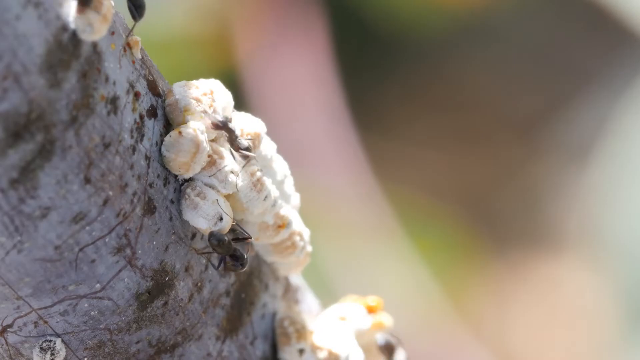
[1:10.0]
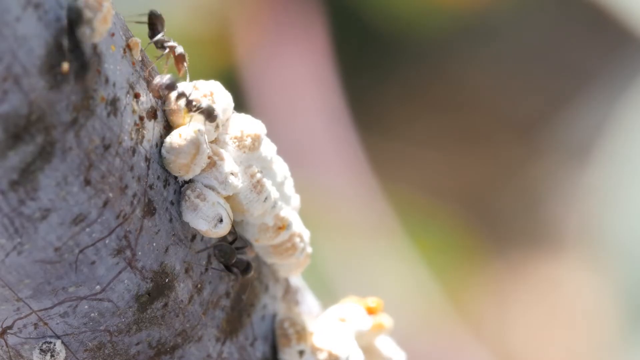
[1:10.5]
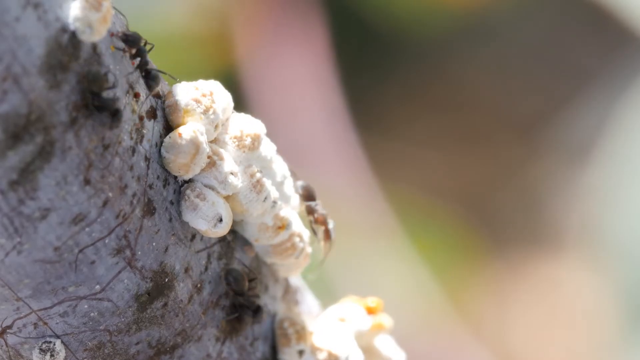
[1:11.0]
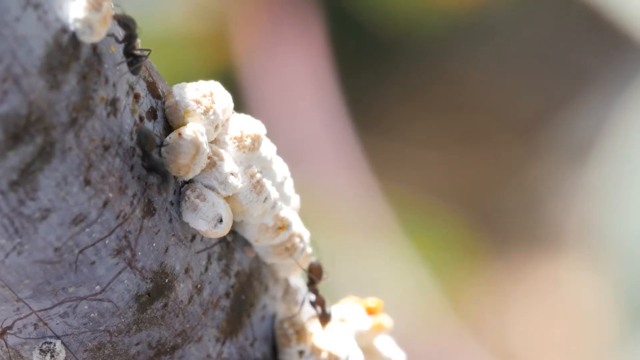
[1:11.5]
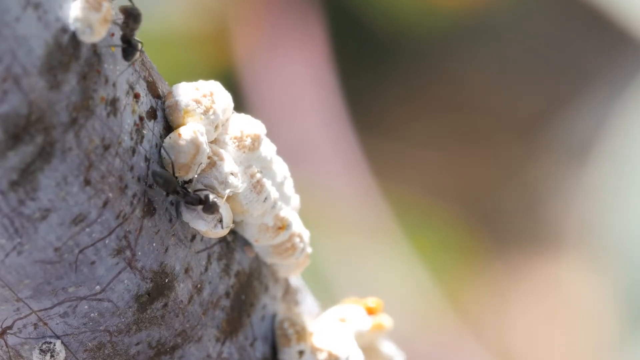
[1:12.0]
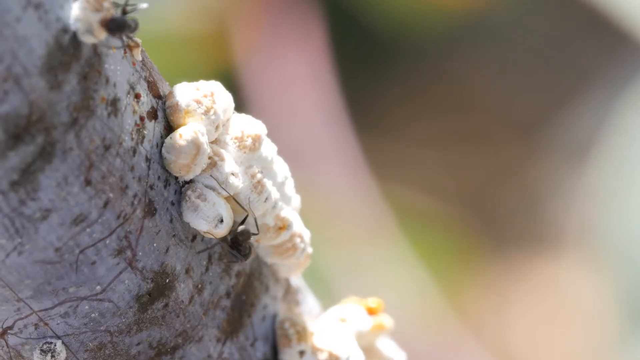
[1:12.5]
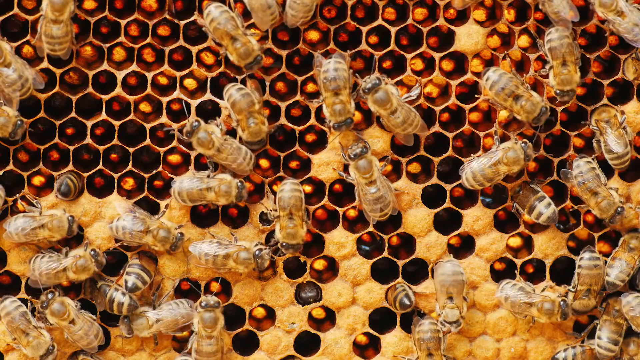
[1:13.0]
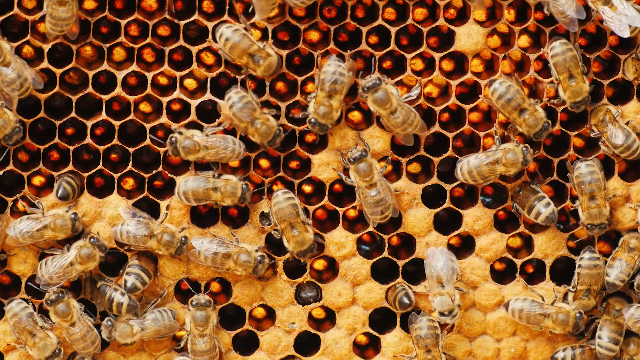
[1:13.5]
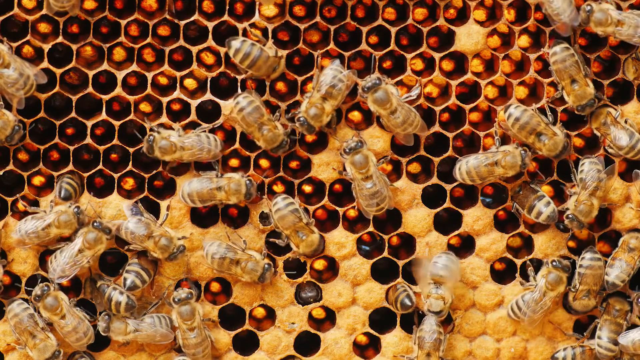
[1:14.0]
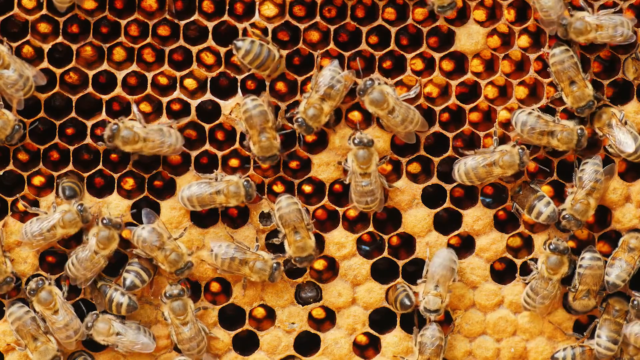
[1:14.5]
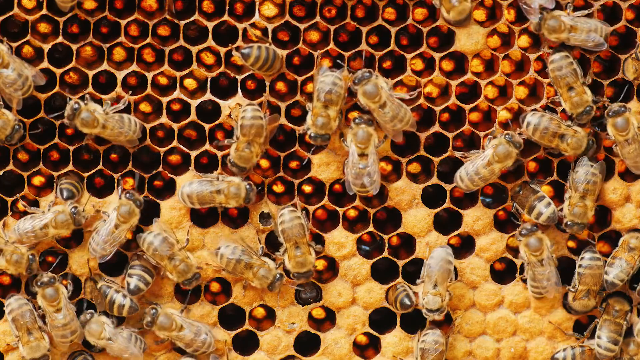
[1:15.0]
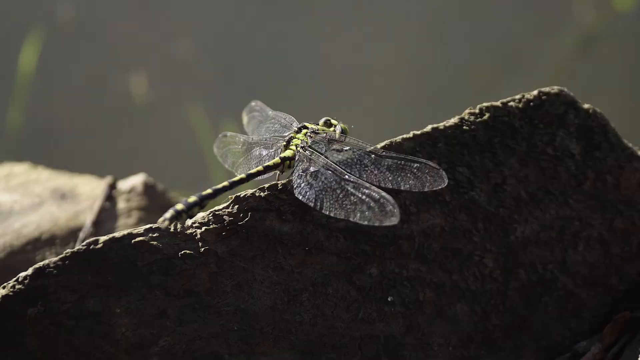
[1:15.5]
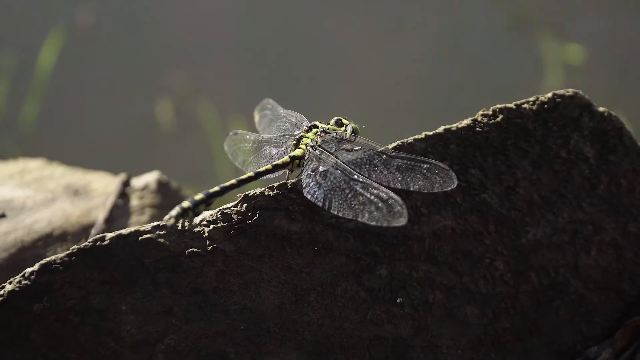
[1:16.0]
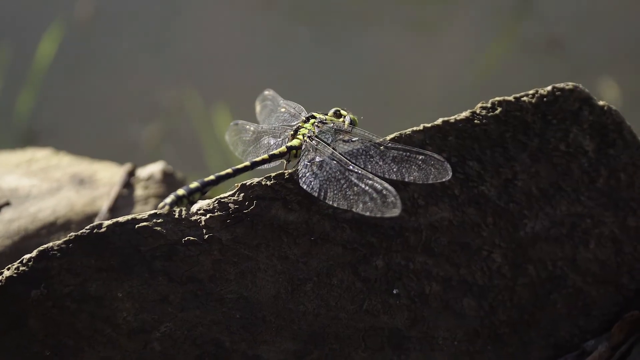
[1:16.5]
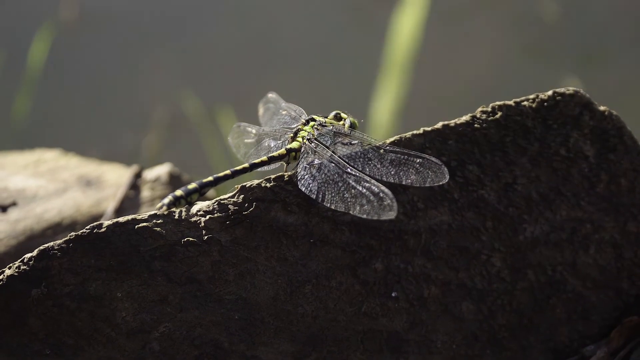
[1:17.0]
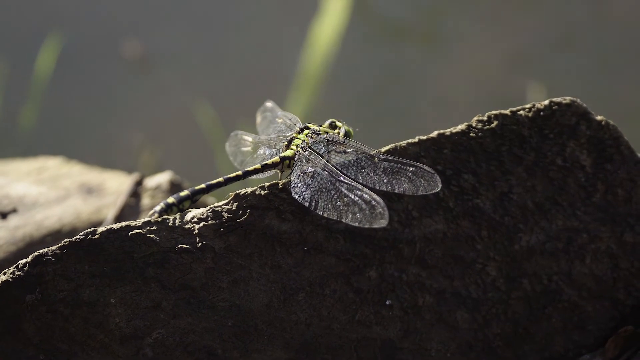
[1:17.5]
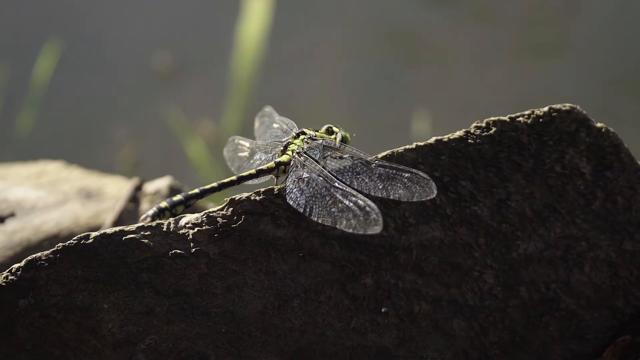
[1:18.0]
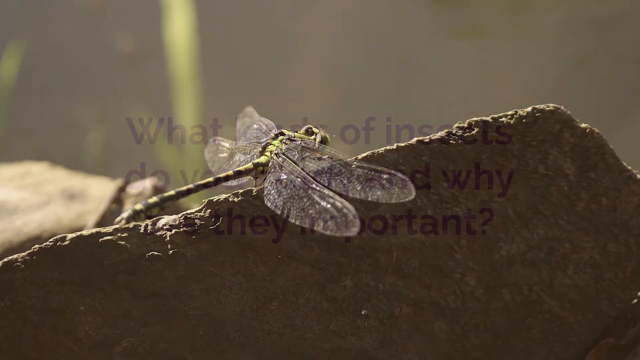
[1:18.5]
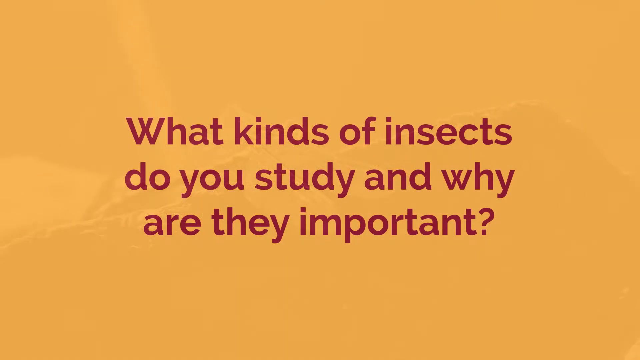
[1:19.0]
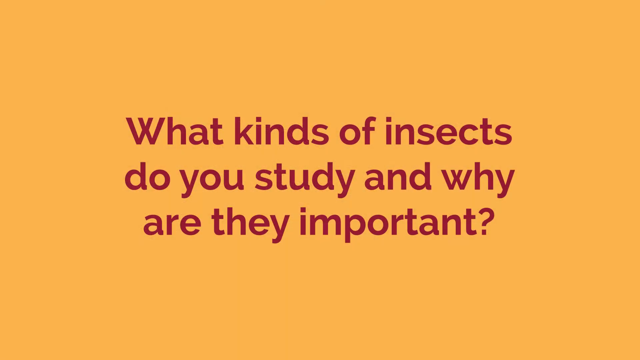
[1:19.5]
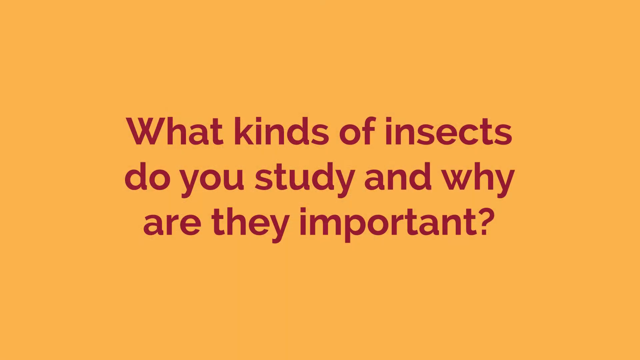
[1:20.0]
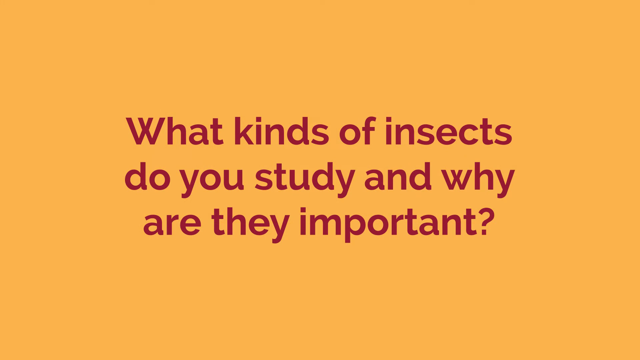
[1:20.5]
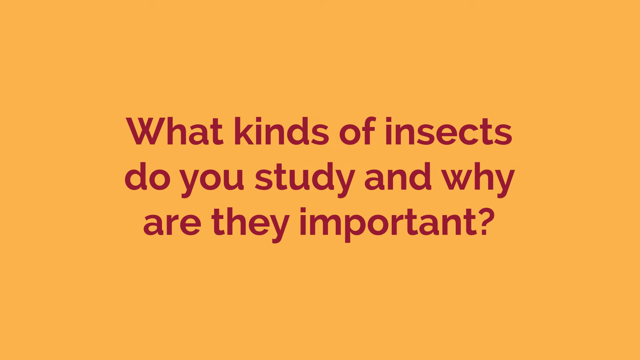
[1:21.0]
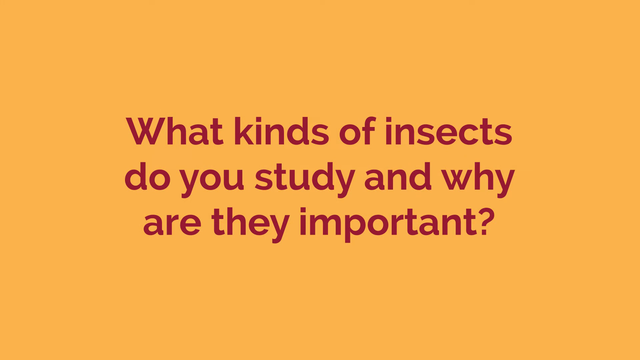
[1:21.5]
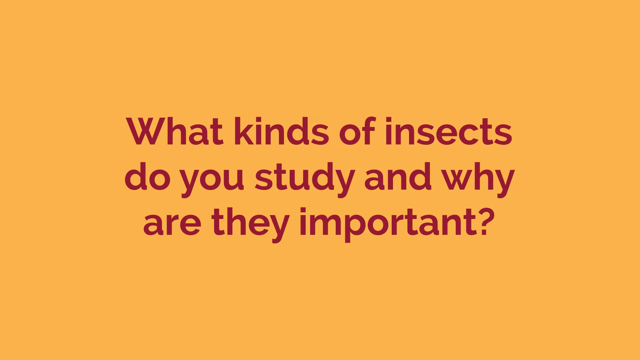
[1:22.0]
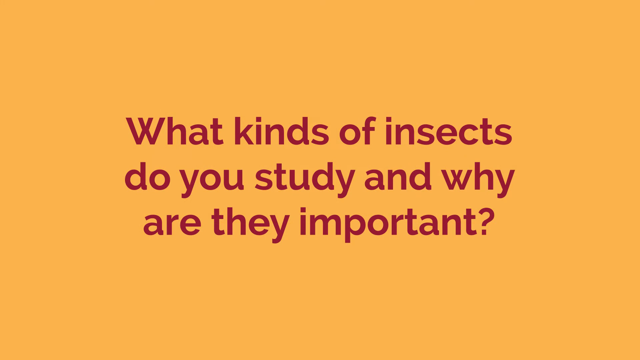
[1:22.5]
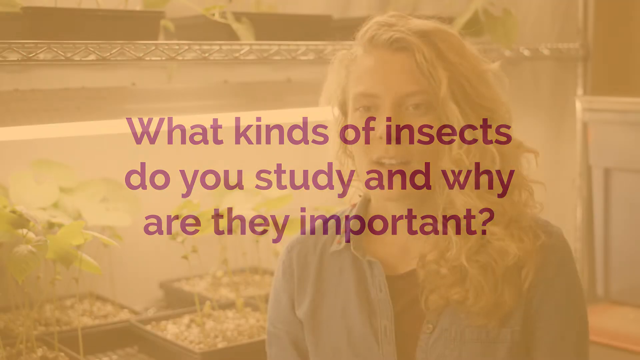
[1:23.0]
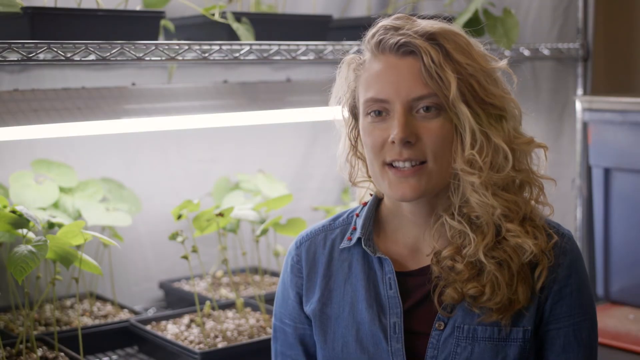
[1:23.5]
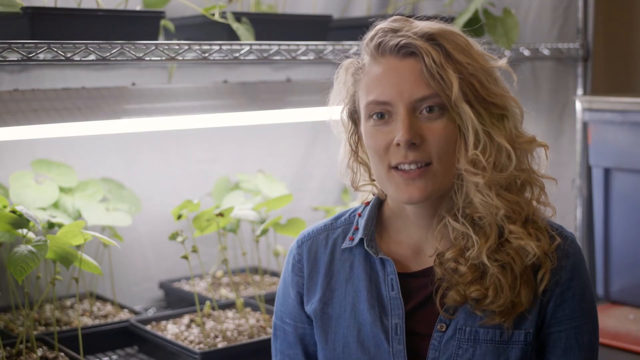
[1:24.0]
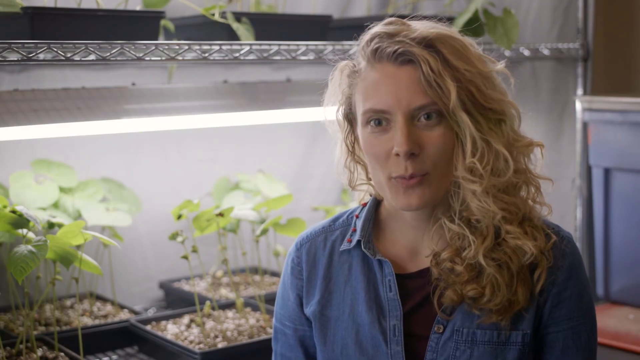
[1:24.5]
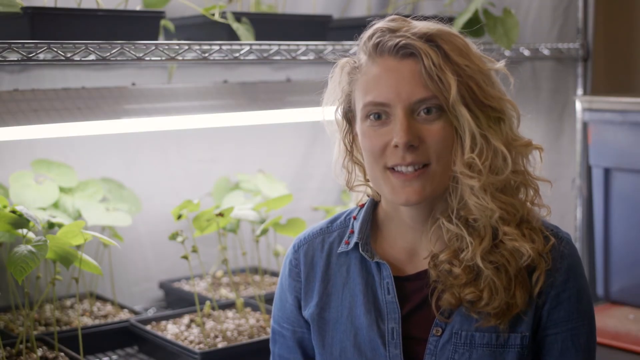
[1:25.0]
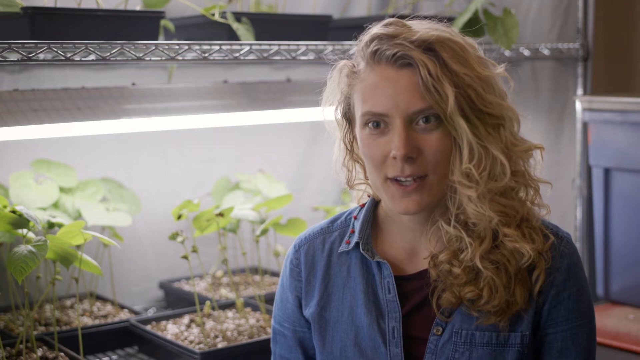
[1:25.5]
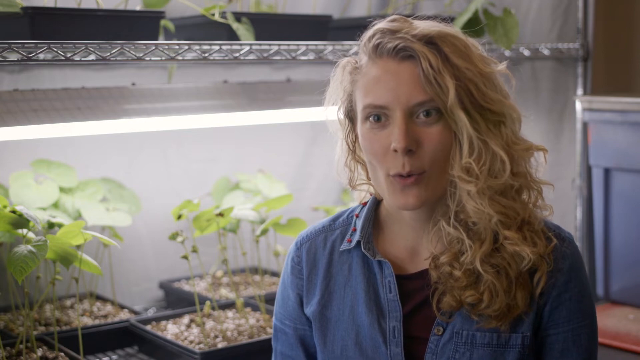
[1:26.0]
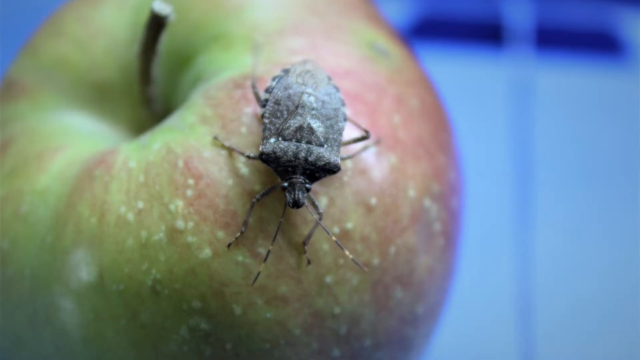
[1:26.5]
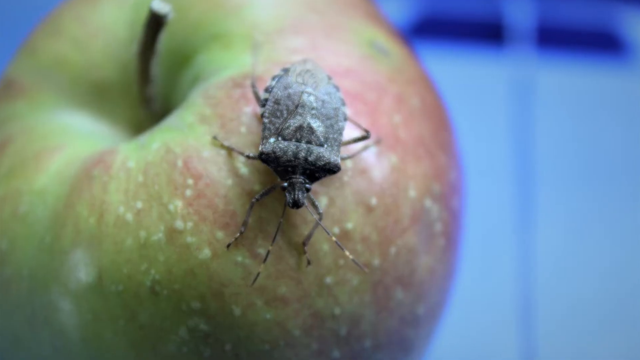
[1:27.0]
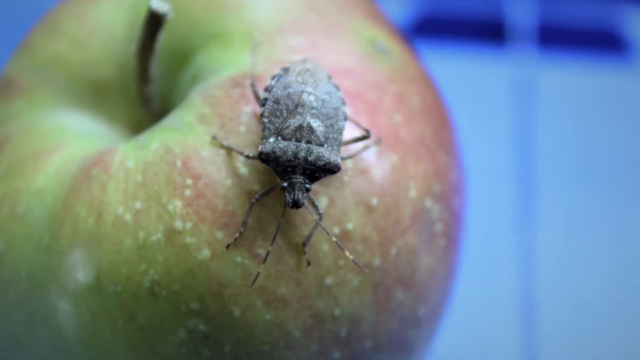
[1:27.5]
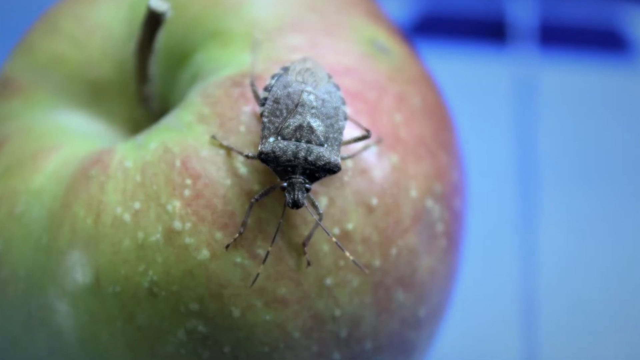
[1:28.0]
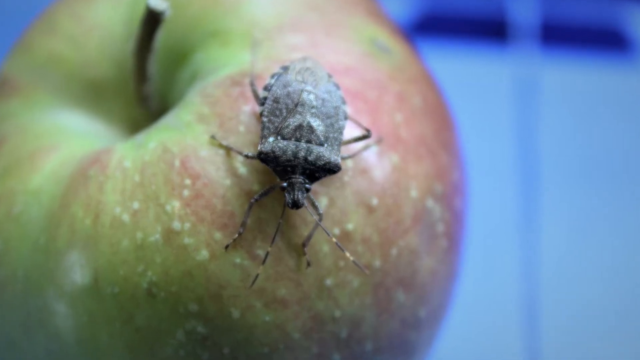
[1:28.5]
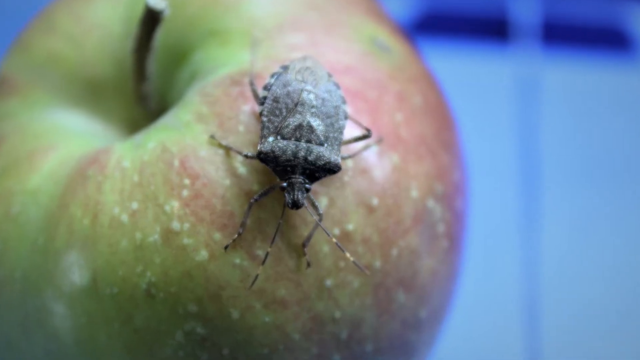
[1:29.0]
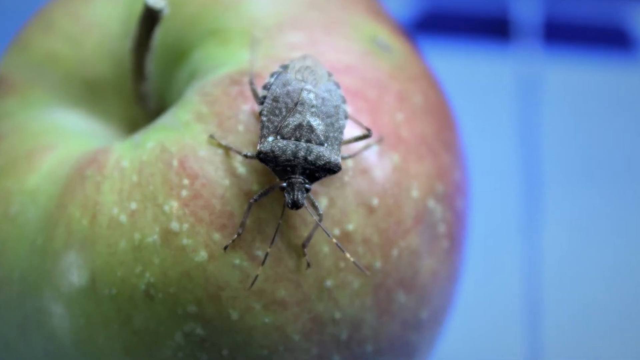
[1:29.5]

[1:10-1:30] Ants crawl on a tree over a white substance attached to it, with a slightly blurry background. A bunch of bees crawl around near a honeycomb and look like they are eating. A dragonfly is on a rock, with branches moving in the background and what looks to be a body of water. A yellow background then shows red bold text reading "what kinds of insects do you study and why are they important." A woman with long, curly, blonde hair wearing a denim jacket talks to the camera, with plants behind her, a light above the plants, and a blue container on the right. Then a stink bug sits on top of an apple, followed by a person's hand holding one of these stink bugs.